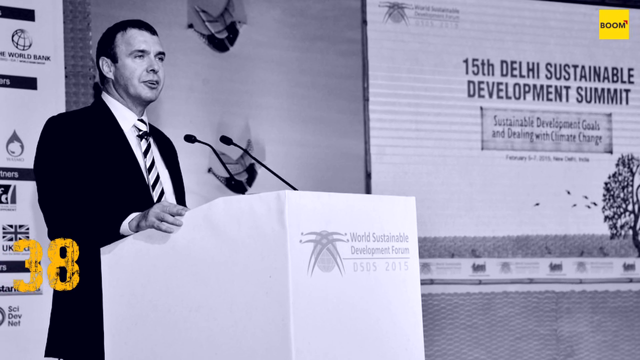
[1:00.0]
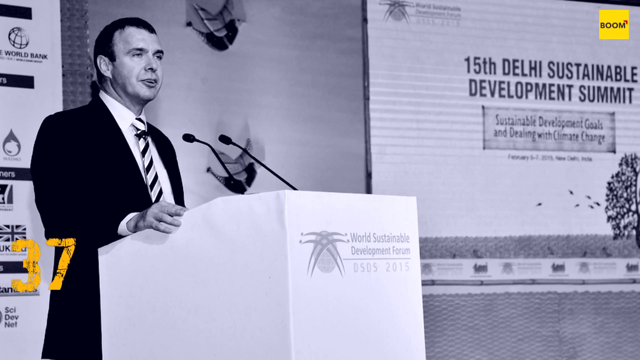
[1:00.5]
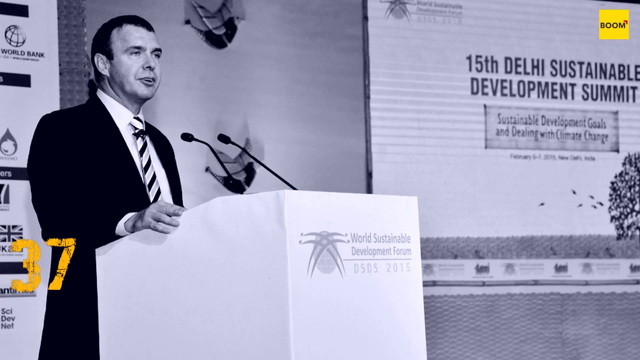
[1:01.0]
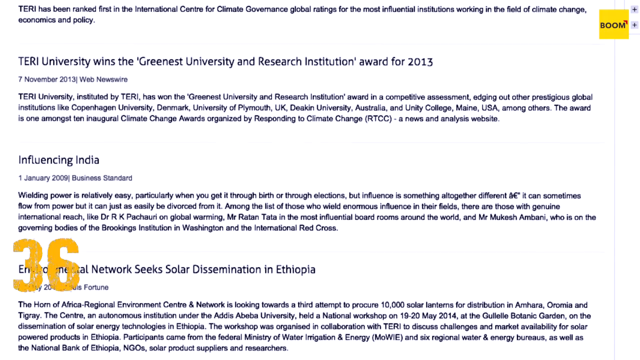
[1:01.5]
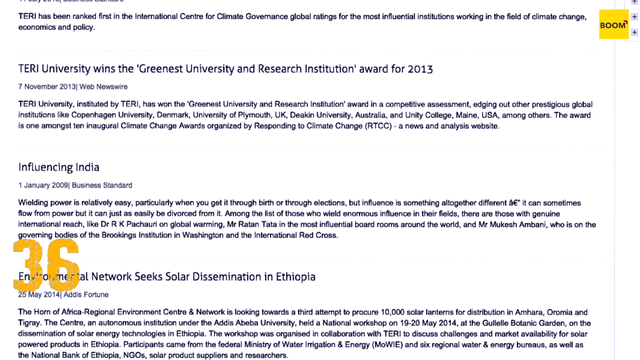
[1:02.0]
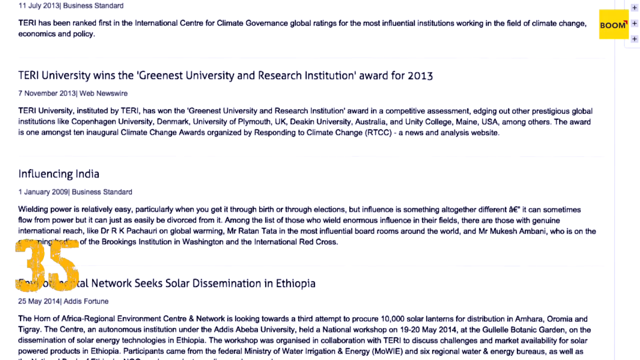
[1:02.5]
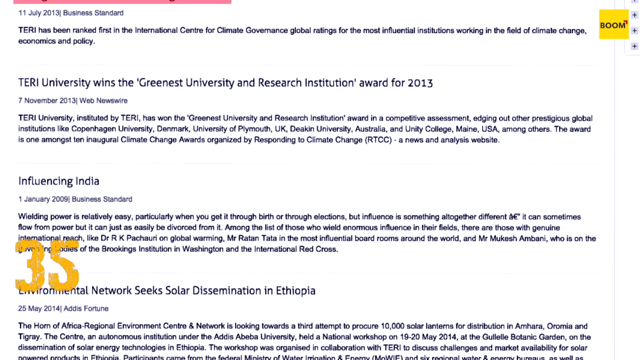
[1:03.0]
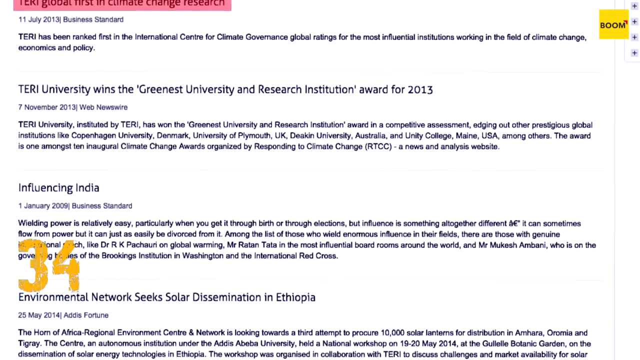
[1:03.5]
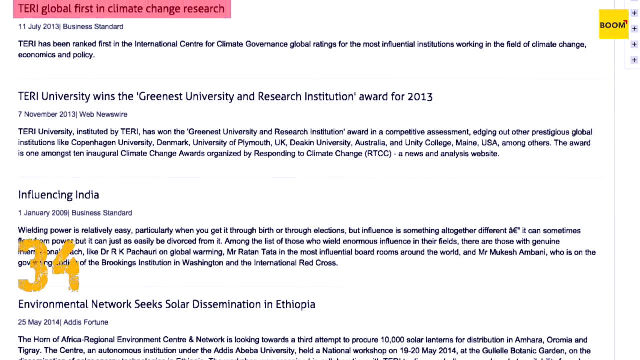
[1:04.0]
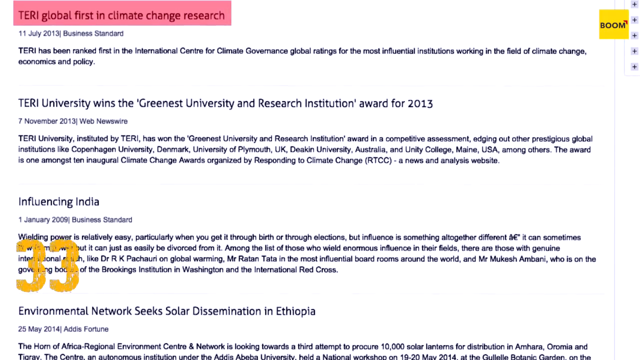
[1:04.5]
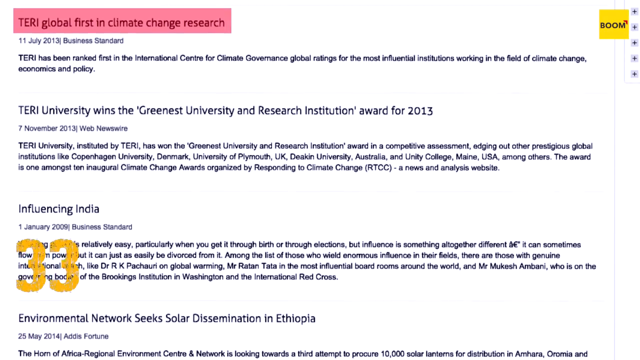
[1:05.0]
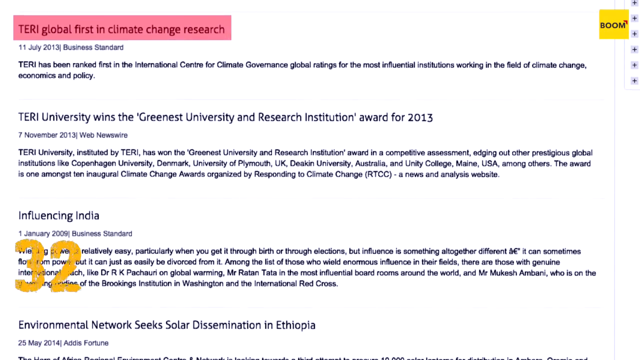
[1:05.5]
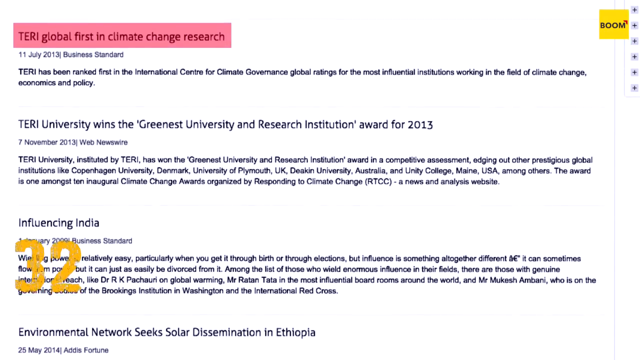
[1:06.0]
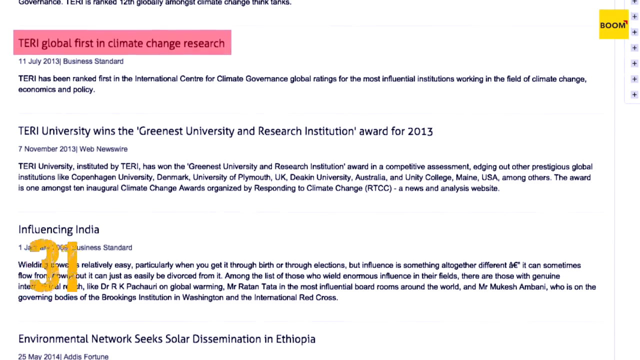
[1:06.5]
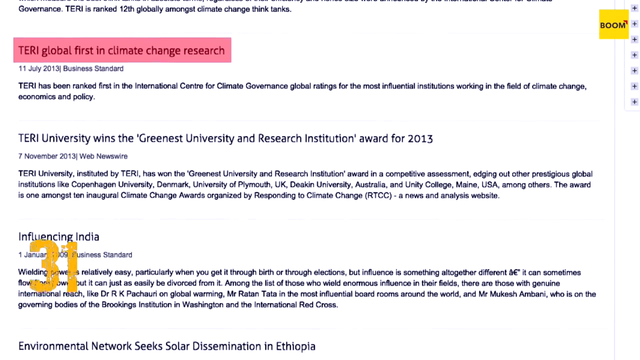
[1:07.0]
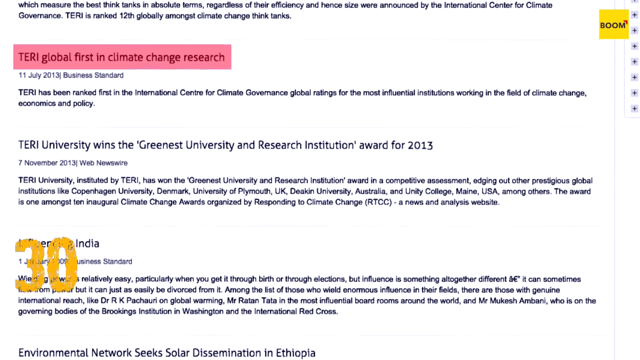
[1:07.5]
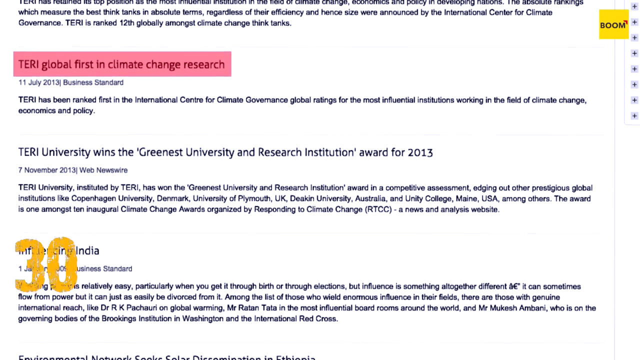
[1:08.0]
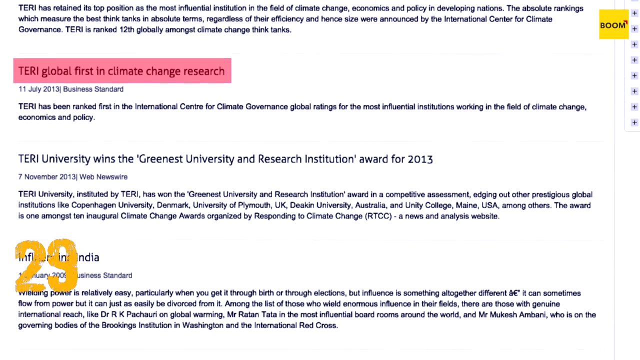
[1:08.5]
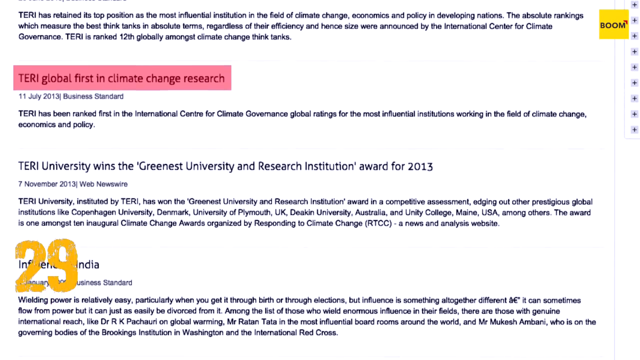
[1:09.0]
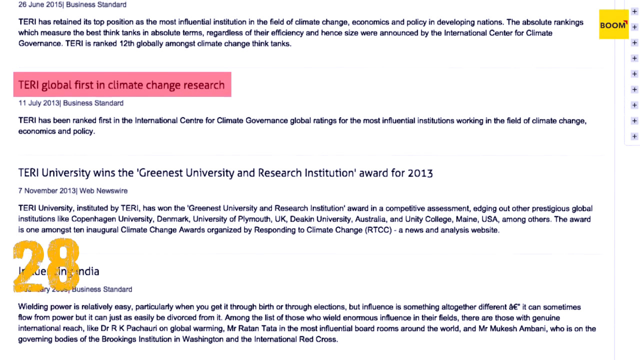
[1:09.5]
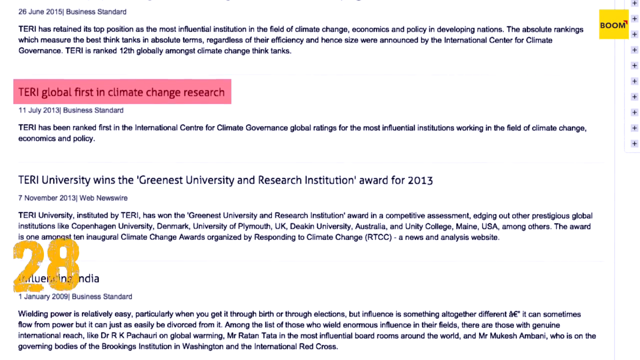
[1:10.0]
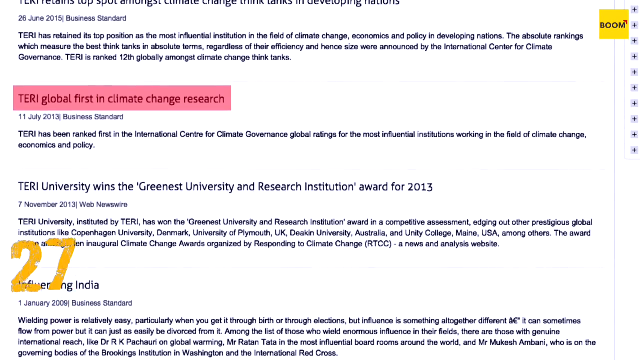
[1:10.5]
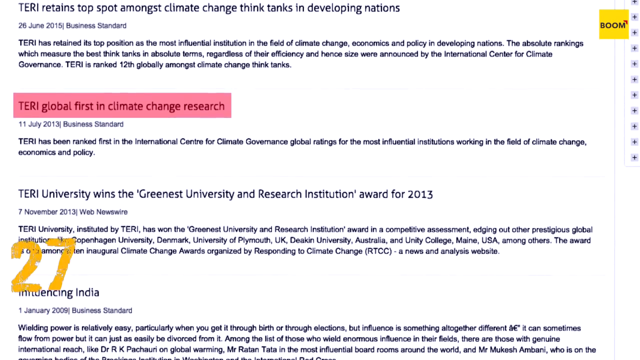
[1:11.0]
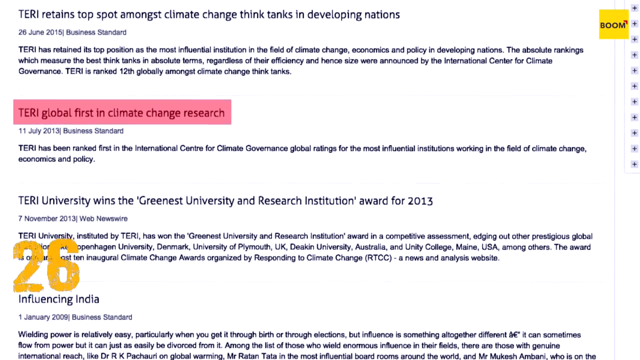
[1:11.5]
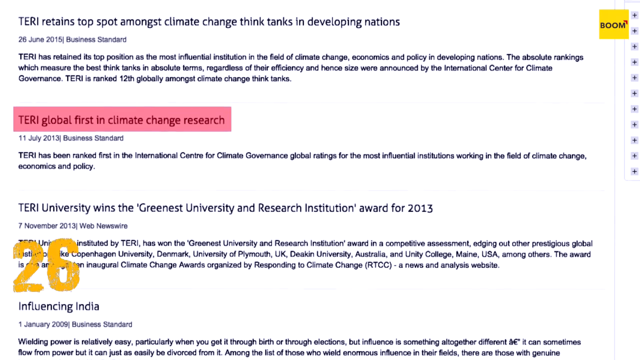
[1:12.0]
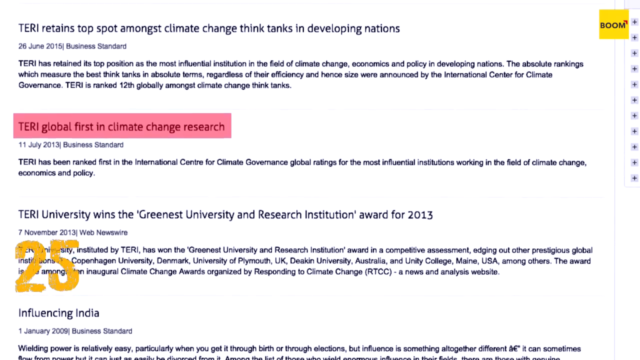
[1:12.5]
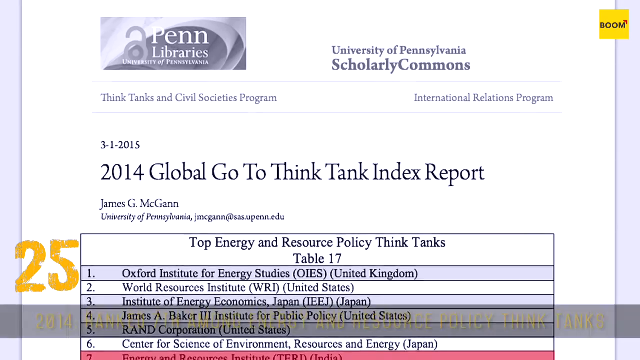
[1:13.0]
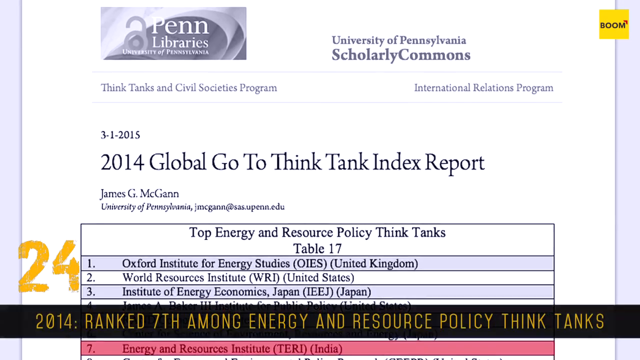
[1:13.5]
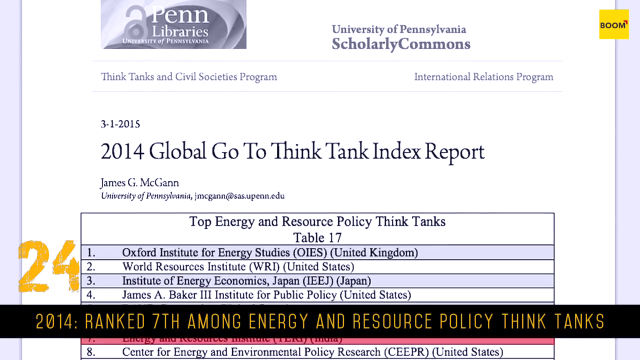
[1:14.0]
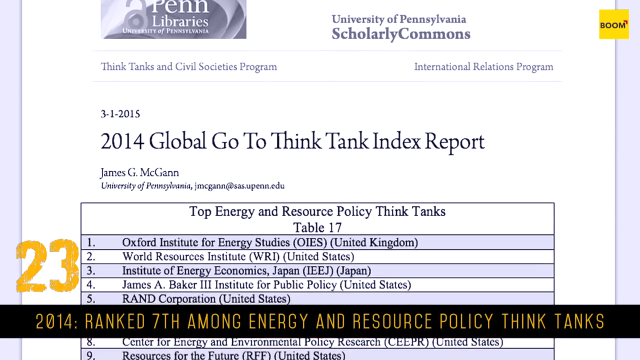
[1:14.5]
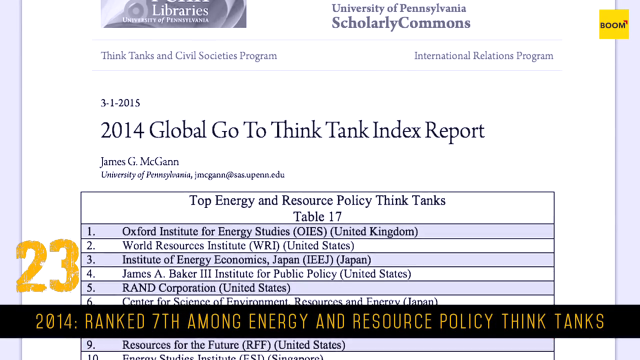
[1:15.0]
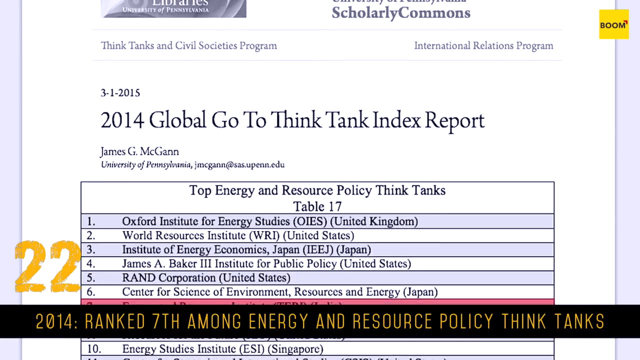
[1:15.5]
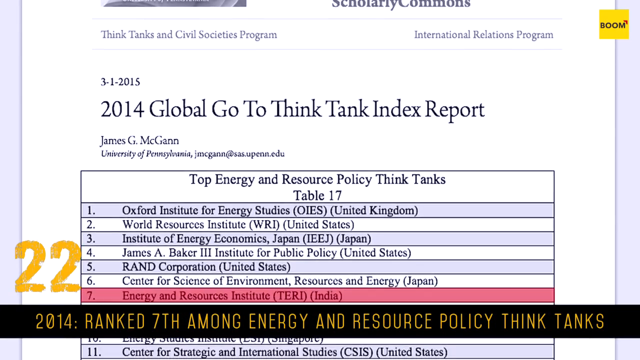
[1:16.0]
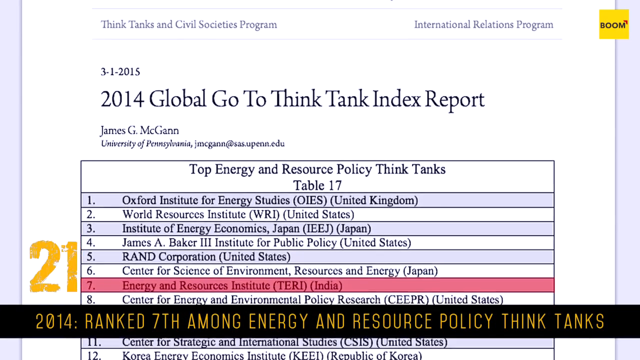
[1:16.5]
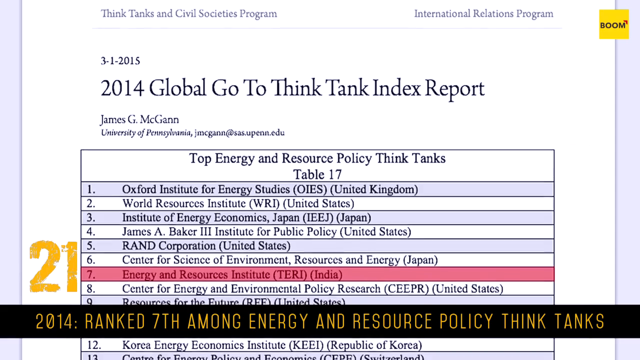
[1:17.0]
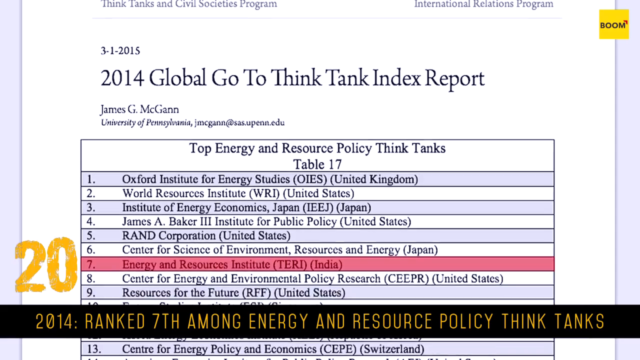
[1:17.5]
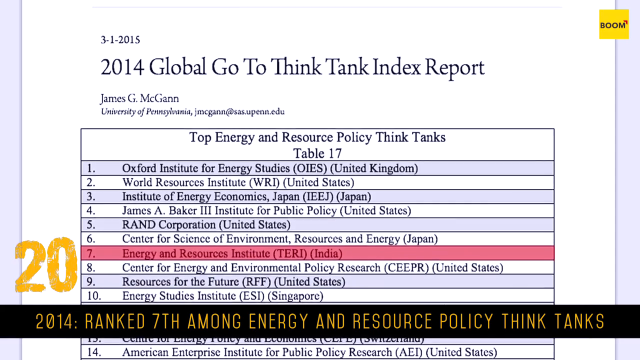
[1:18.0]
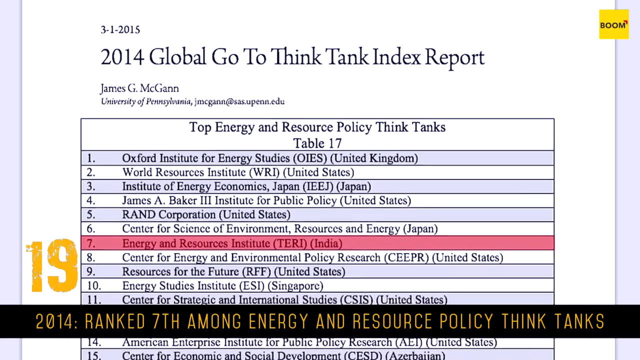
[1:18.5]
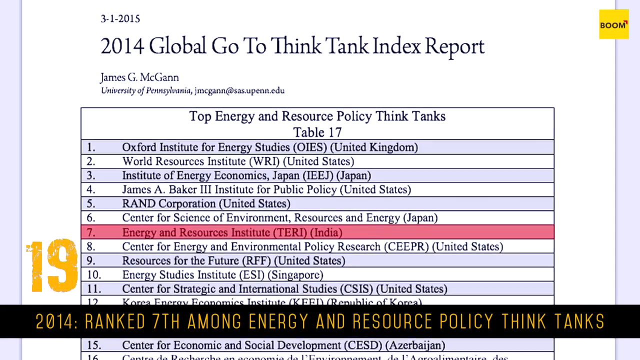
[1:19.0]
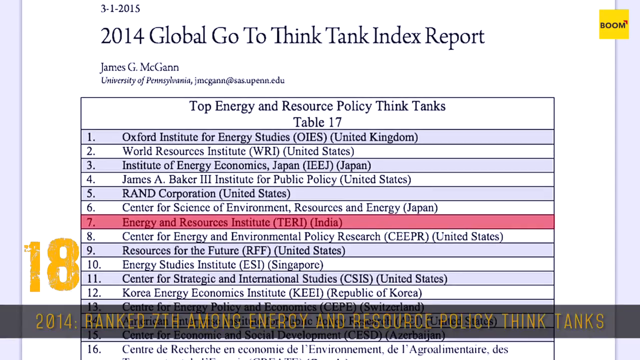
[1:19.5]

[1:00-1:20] What may be a day-by-day timeline of news items follows: "Teddy global first in climate research", dated 11 July 2013; "Teddy University wins the Greenest University and Research Institution Award of 2013", dated 7 November 2013; an item about influence in India dated 1 January 2009; and "Teddy retains top spot amongst climate change think tanks in developing nations", dated 26 June 2015. Then a document from the University of Pennsylvania titled "2014 Global Go to Think Tank Index Report" is shown, with Teddy in 7th place. Teddy is shown to stand for the Energy and Resource Institute of India, and Teddy ranked 7th among energy and resource policy think tanks in 2014.